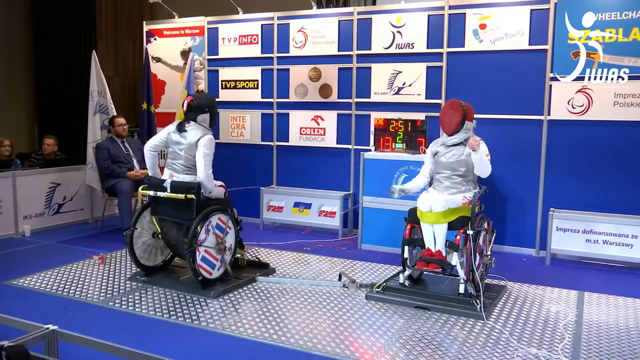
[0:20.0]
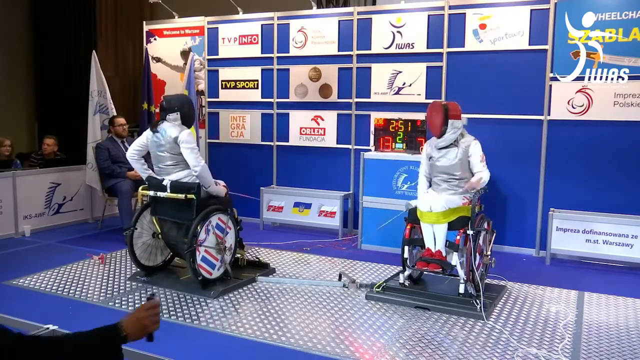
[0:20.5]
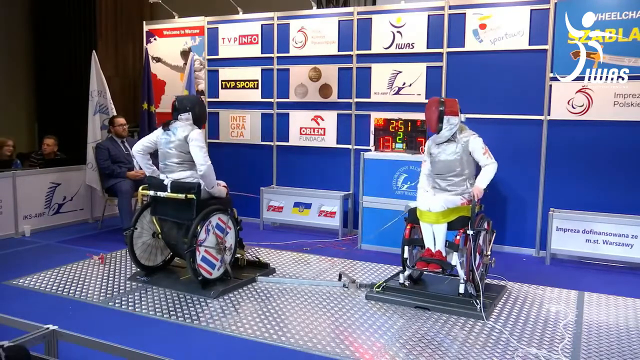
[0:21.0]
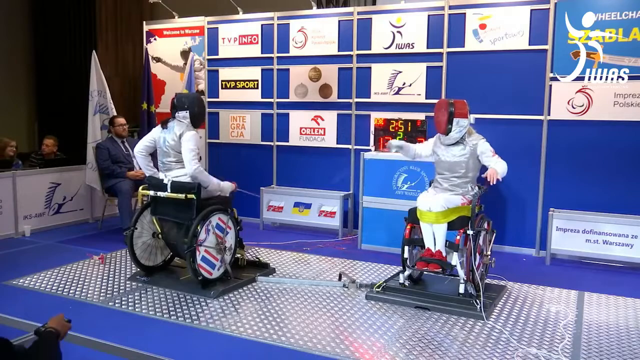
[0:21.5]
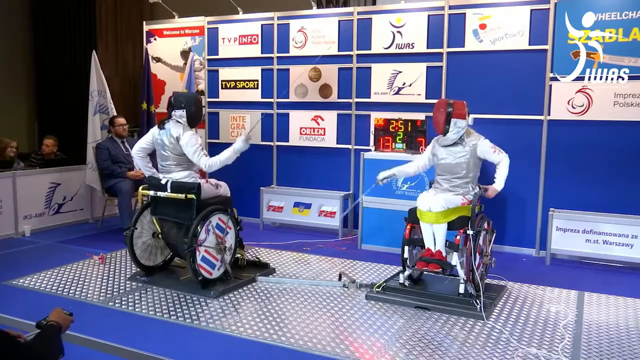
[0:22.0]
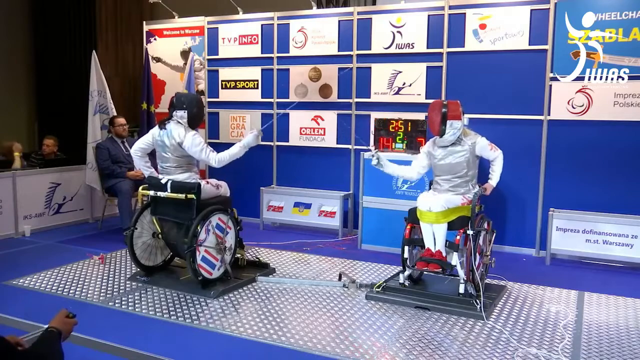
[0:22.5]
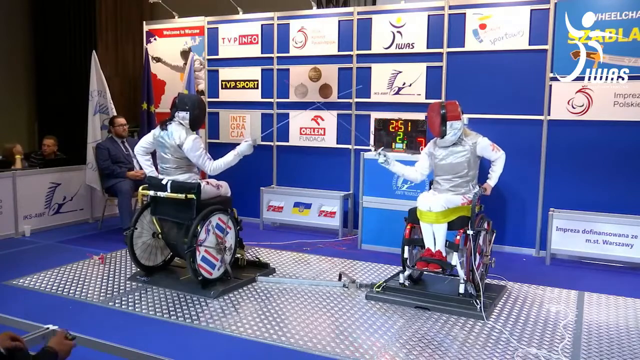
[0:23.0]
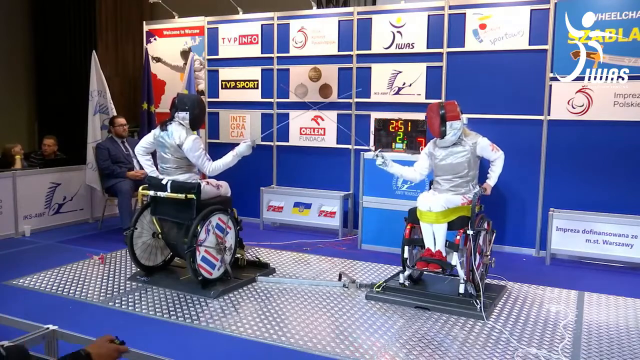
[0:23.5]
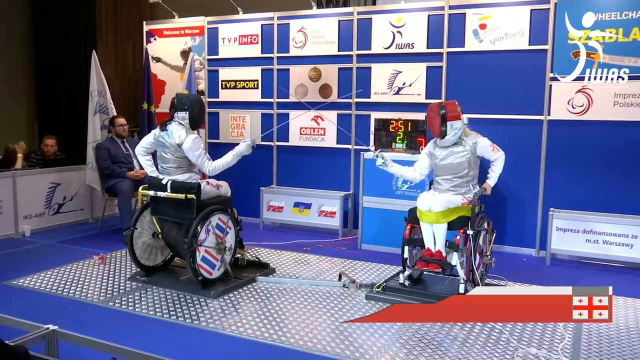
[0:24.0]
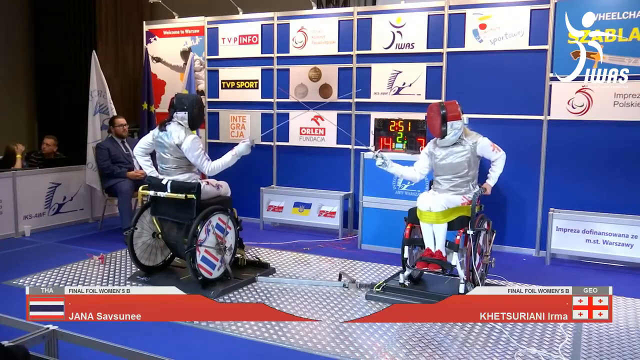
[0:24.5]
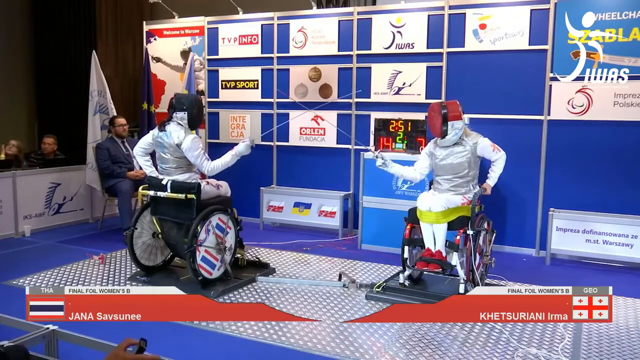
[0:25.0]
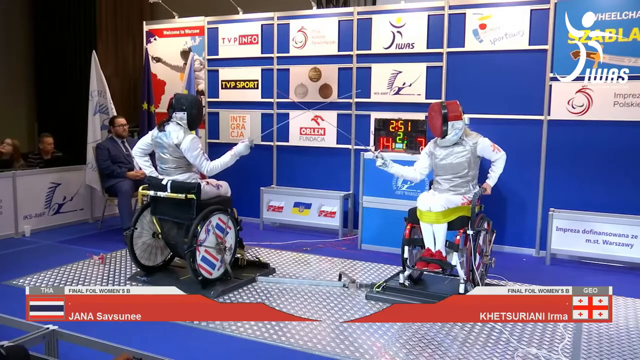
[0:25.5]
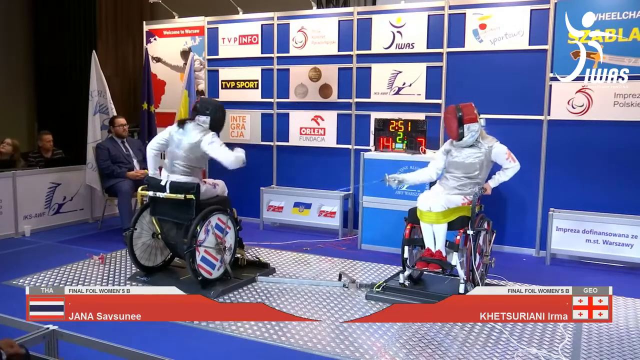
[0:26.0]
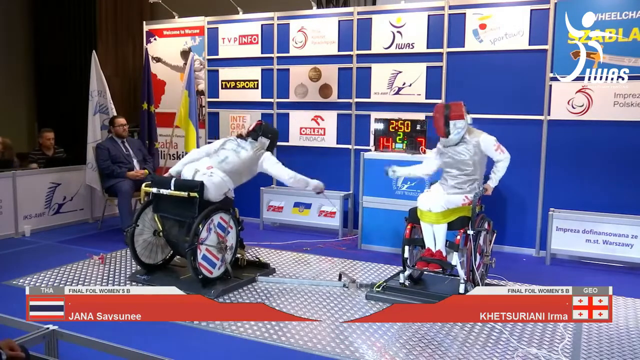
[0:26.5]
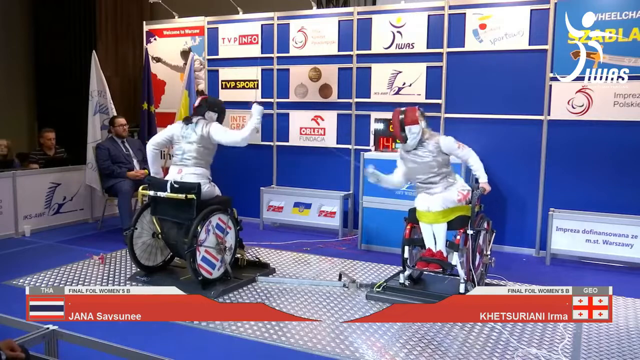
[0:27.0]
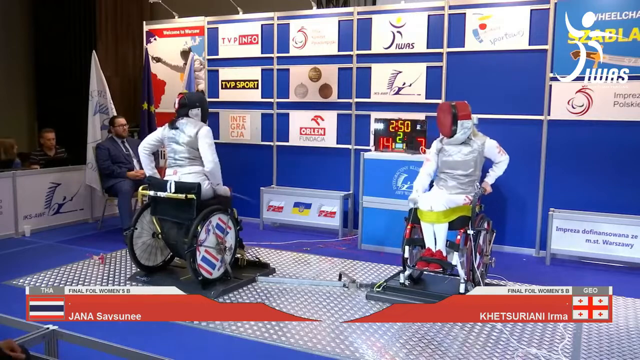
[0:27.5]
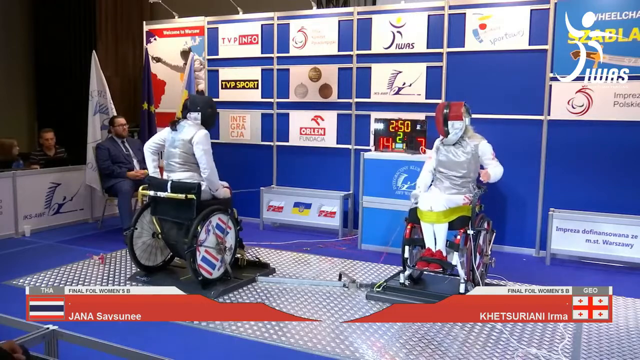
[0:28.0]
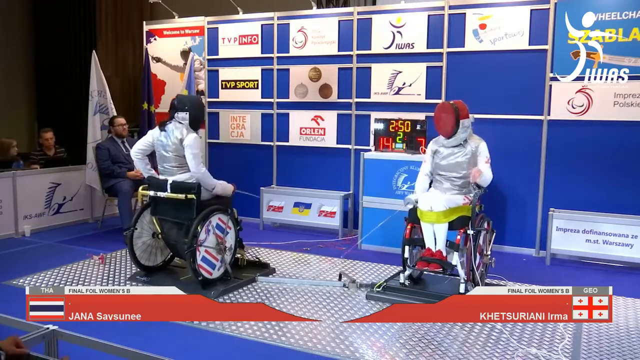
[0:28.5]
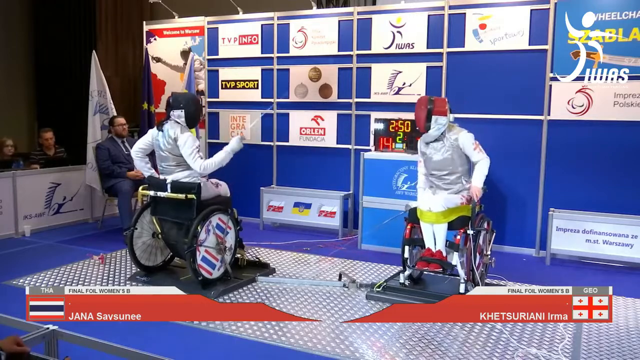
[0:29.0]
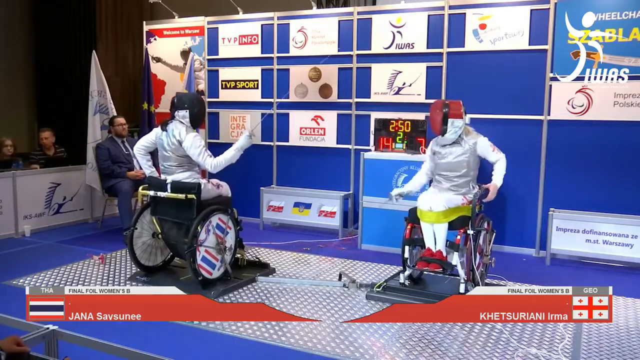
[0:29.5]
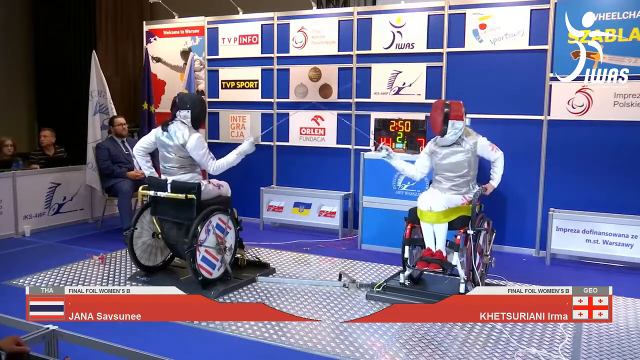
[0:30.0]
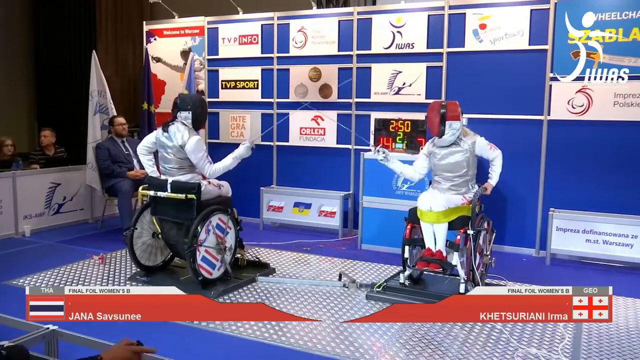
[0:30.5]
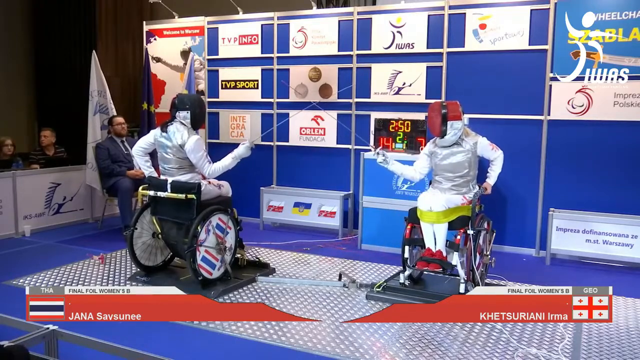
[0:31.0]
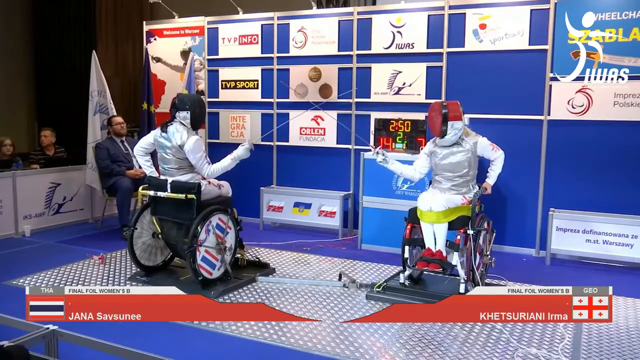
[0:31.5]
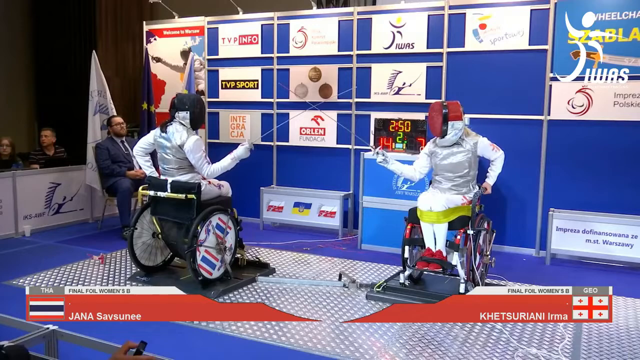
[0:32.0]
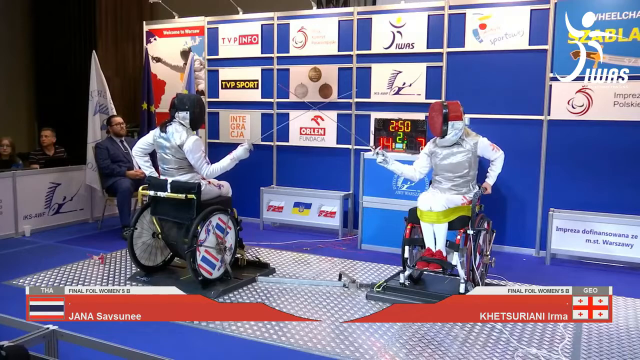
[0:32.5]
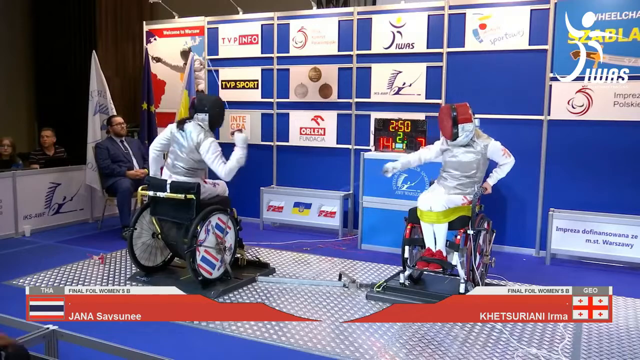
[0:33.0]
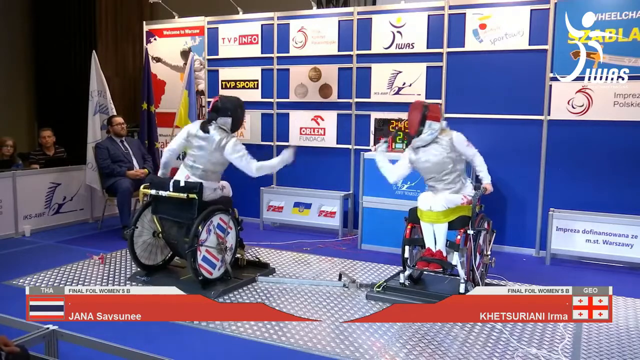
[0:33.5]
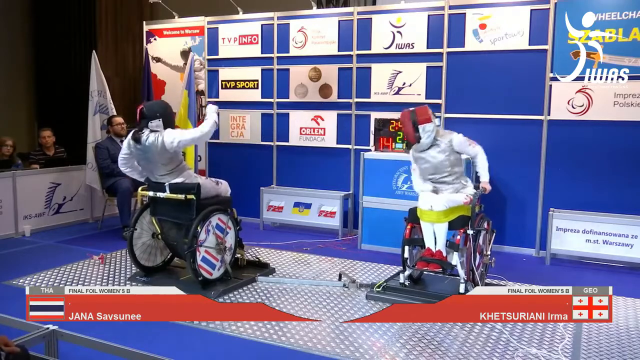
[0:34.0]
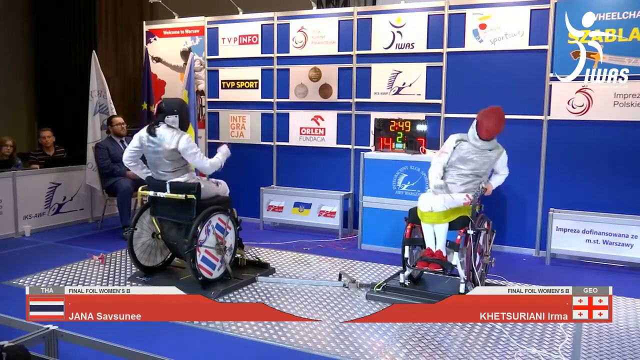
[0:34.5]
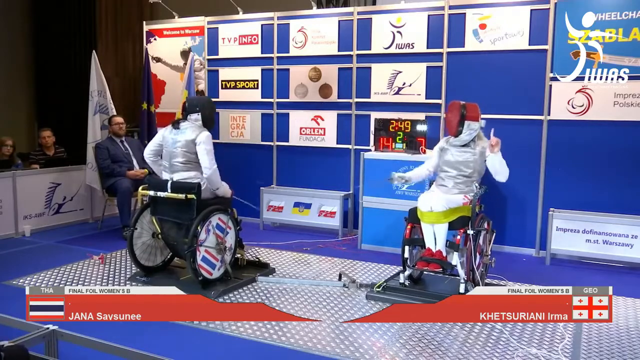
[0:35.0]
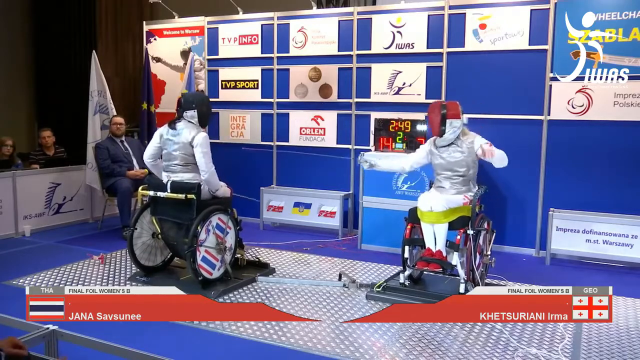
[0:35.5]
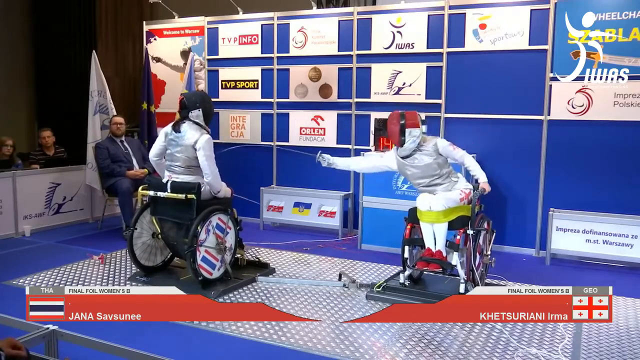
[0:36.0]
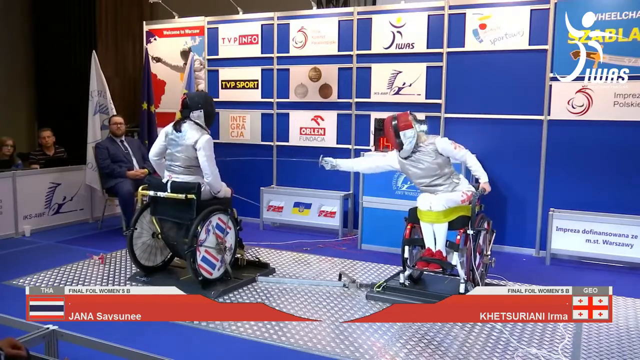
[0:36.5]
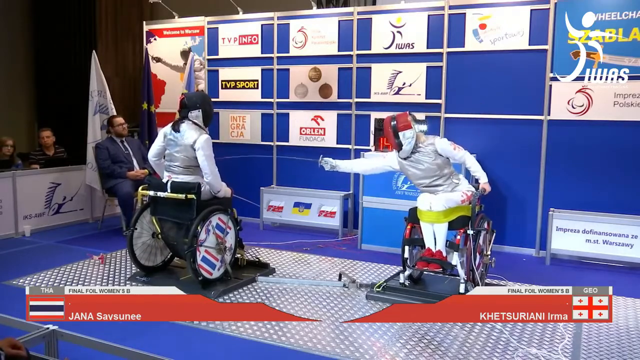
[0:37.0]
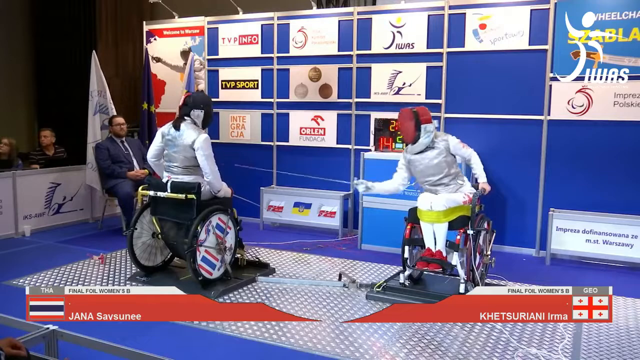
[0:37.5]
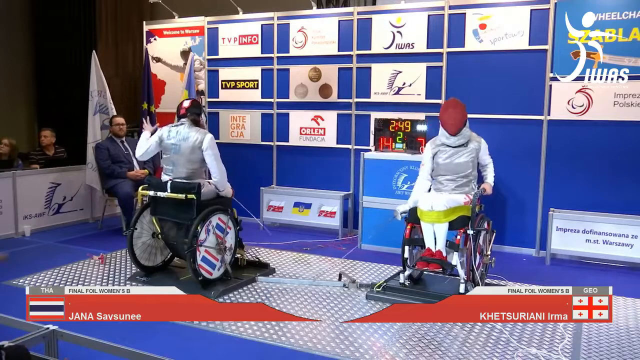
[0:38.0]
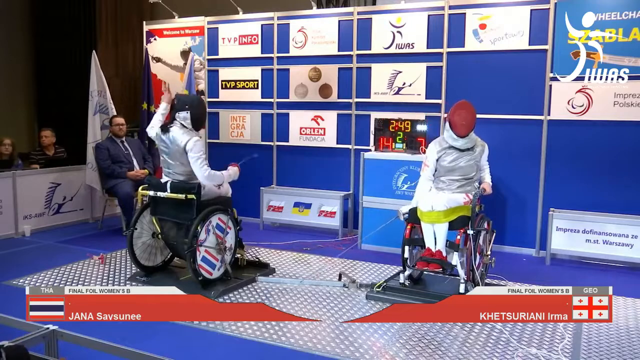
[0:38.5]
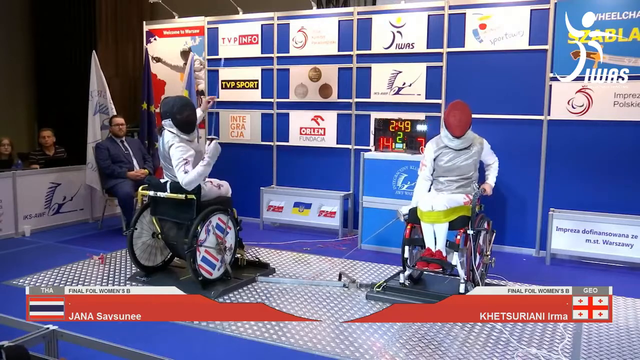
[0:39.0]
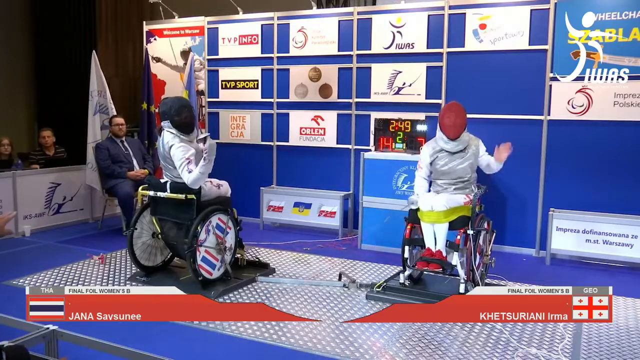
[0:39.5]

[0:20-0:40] The two fencers put their very thin fencing swords together. A scoreboard is behind them, toward the right. They continue to battle back and forth. The person on the left appears to have more points than the person on the right; the score is 14 to 7, and there is a timer on the scoreboard. They put their swords together to create an X and then begin their attacks. The person on the right wears a red mask and the person on the left wears a black mask, and the masks completely cover their faces. Both wear white, standard traditional fencing uniforms. On the ground is some sort of metal textured plate that the wheelchairs are on.